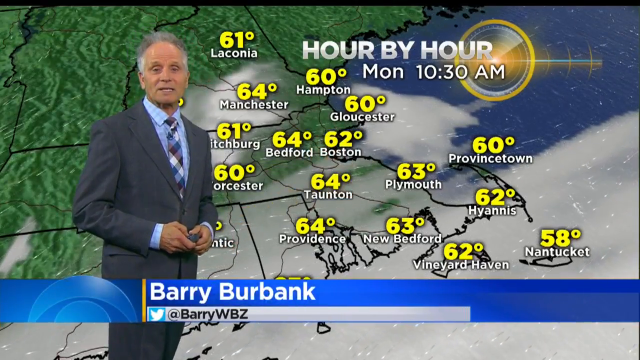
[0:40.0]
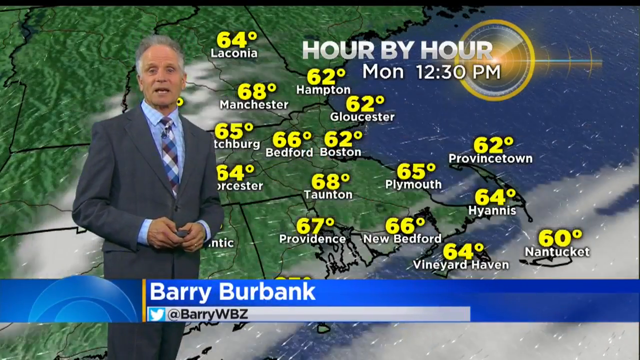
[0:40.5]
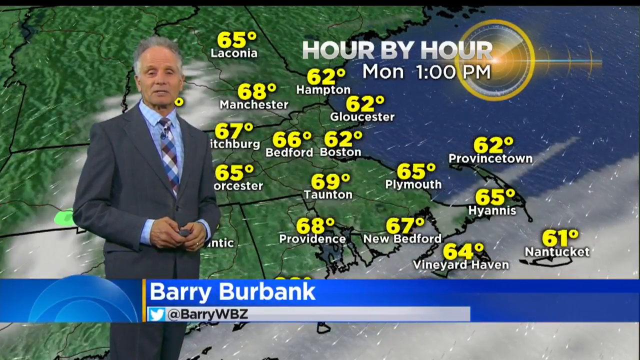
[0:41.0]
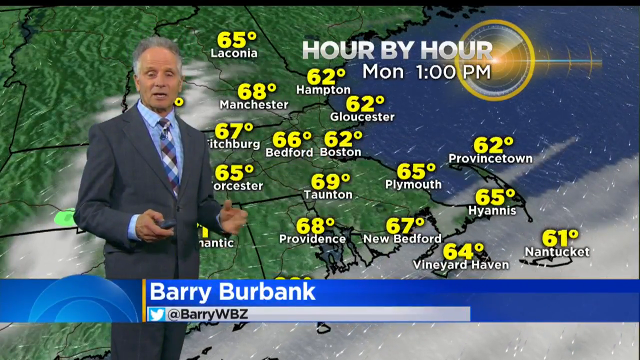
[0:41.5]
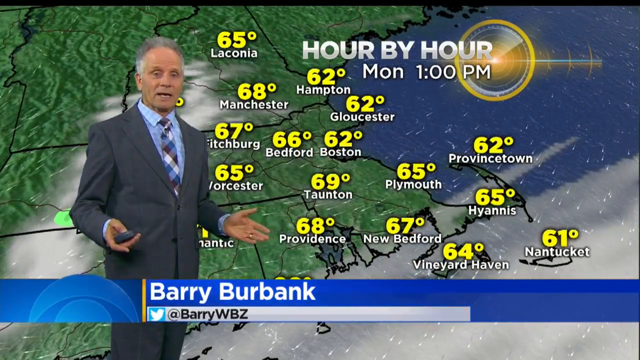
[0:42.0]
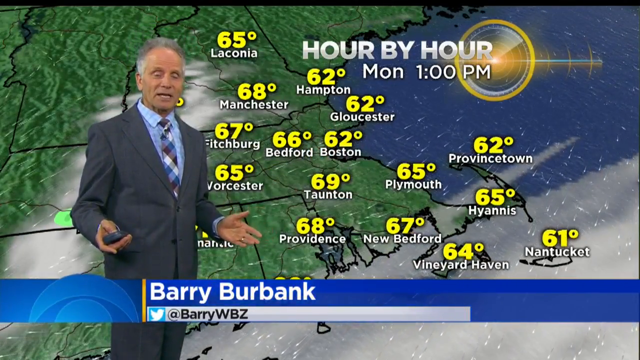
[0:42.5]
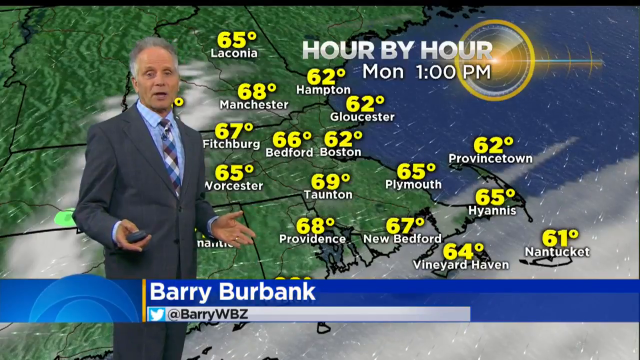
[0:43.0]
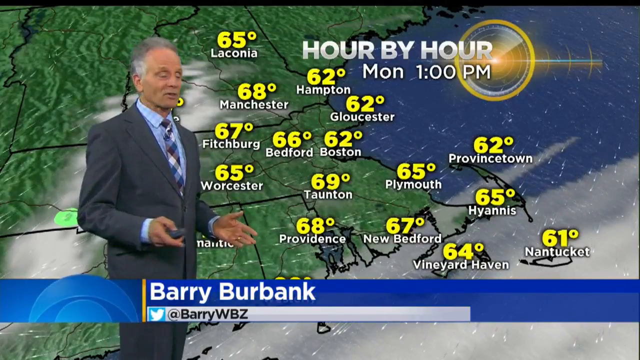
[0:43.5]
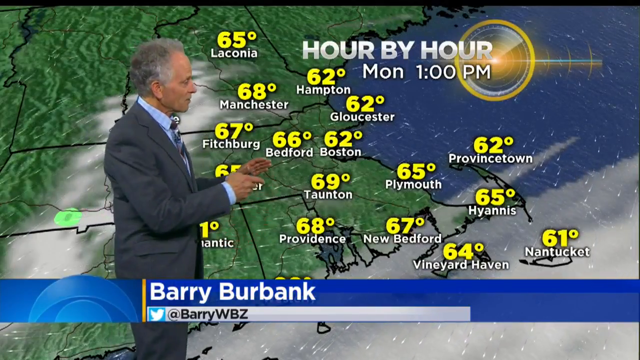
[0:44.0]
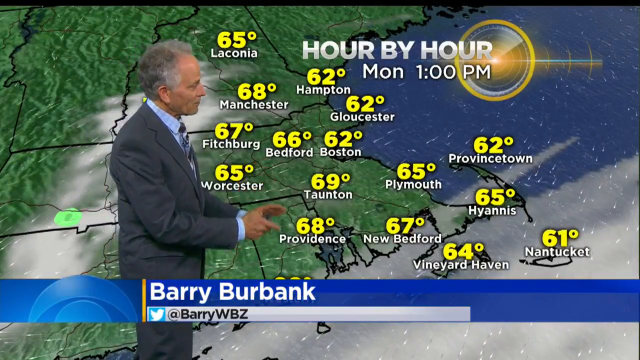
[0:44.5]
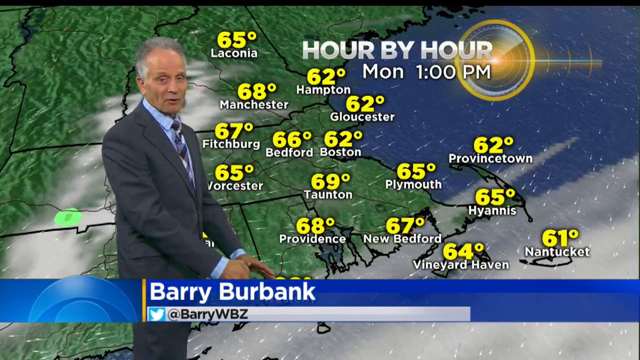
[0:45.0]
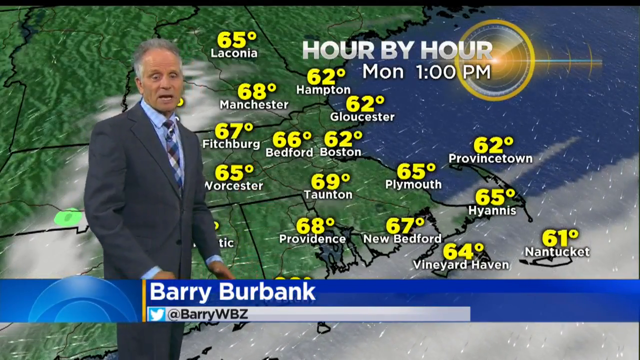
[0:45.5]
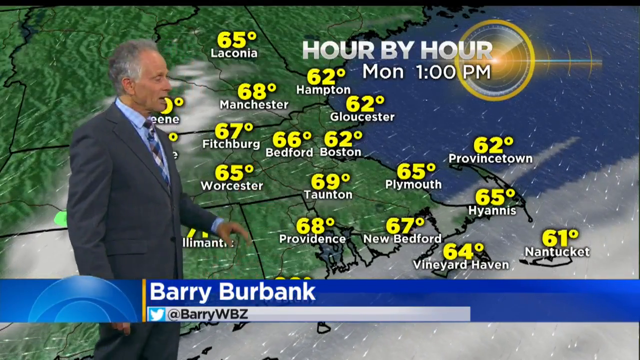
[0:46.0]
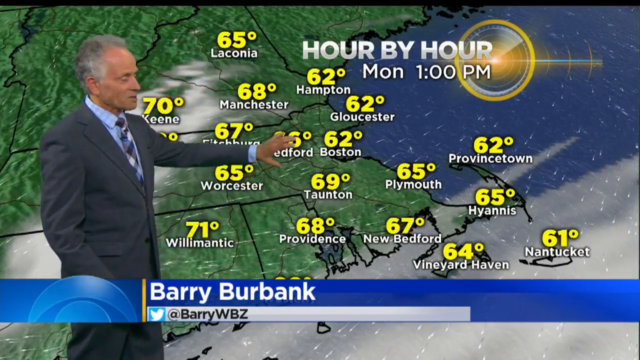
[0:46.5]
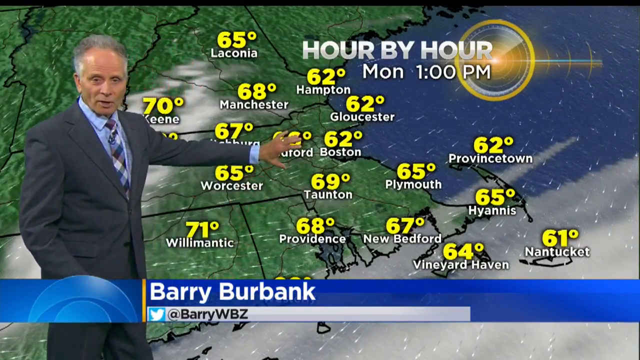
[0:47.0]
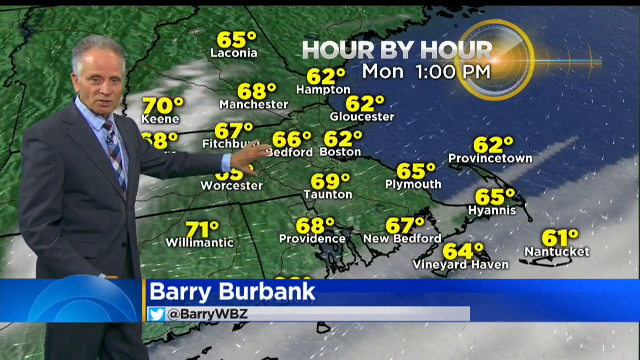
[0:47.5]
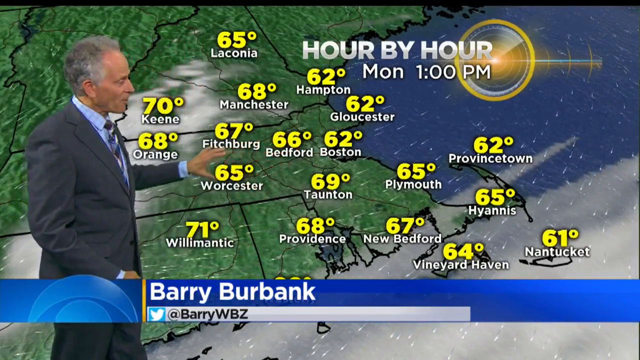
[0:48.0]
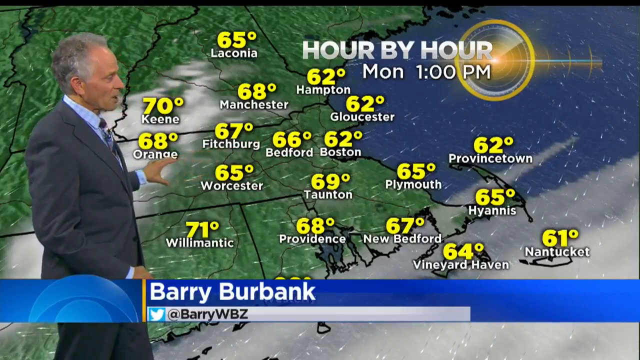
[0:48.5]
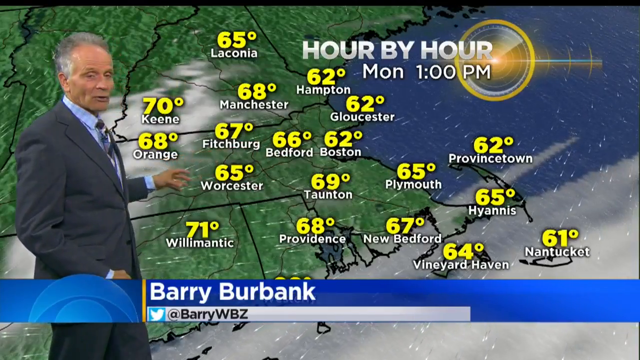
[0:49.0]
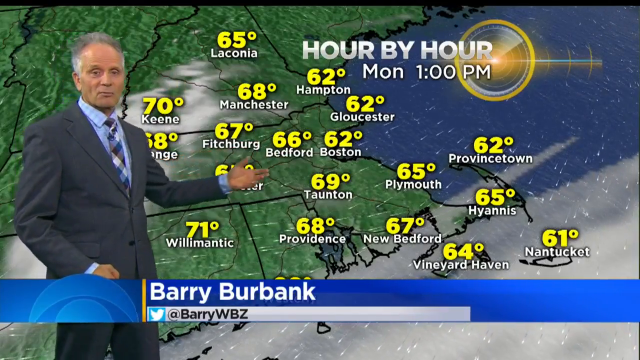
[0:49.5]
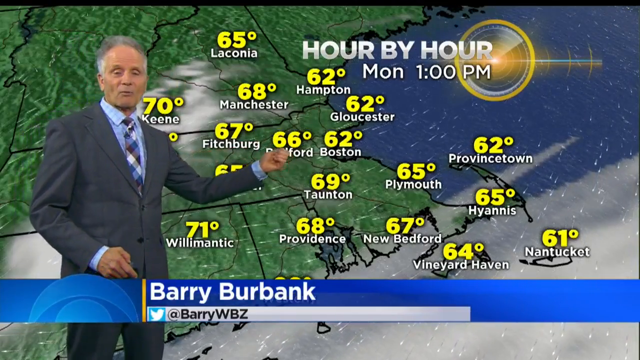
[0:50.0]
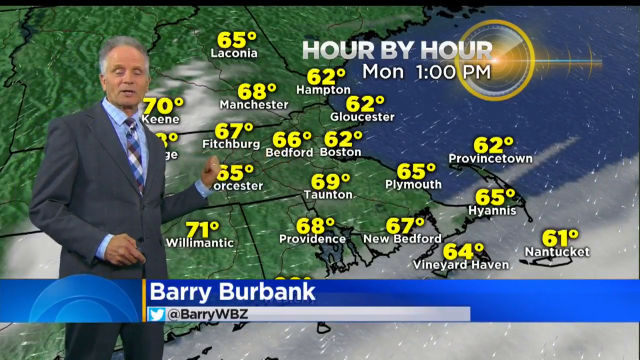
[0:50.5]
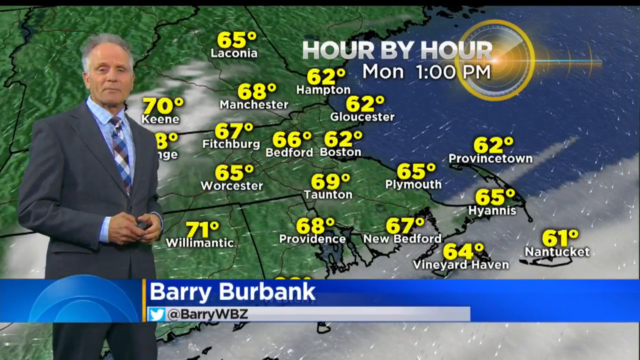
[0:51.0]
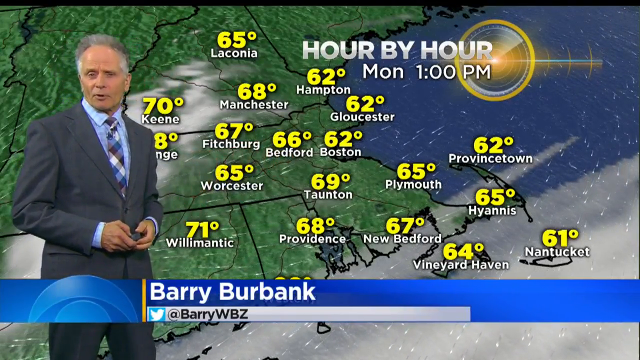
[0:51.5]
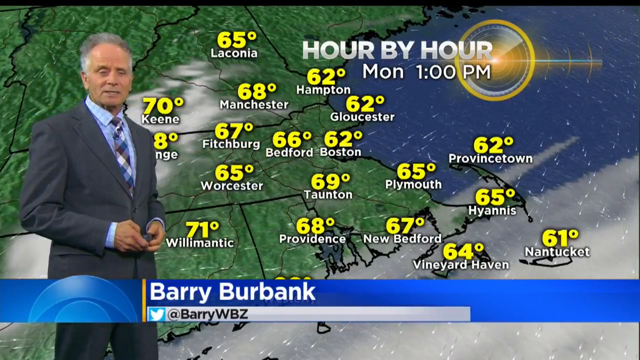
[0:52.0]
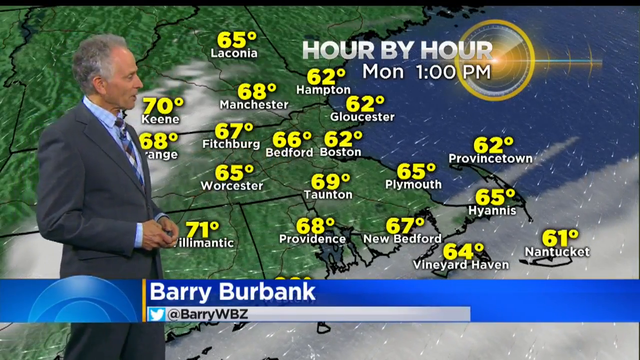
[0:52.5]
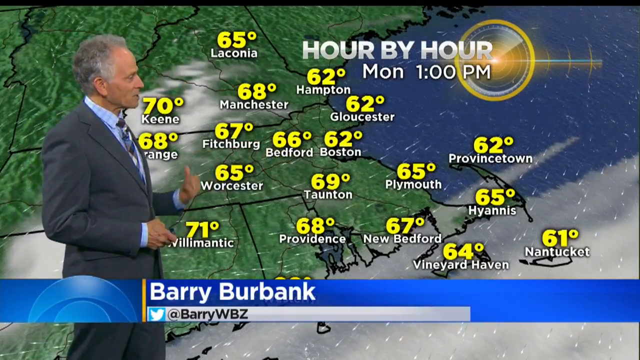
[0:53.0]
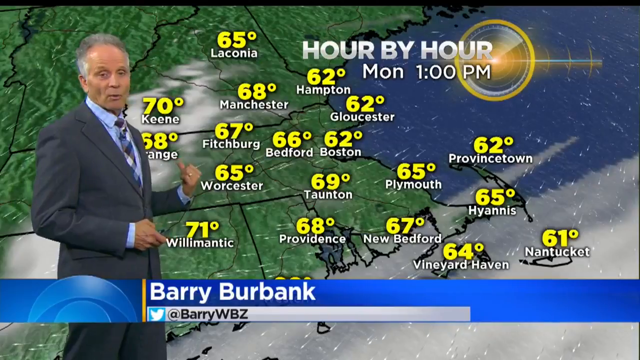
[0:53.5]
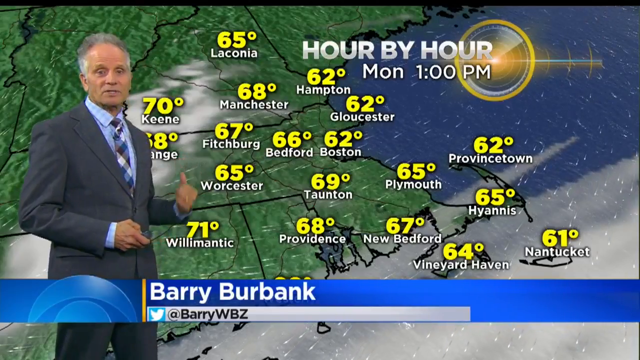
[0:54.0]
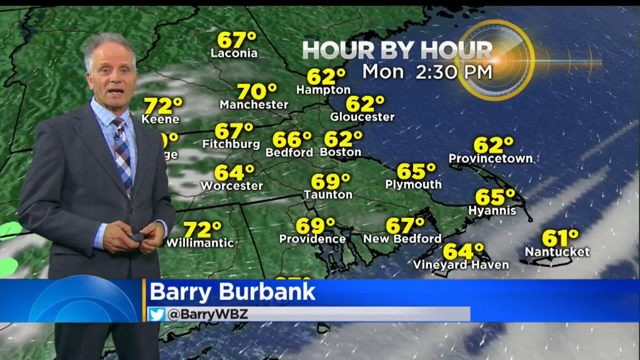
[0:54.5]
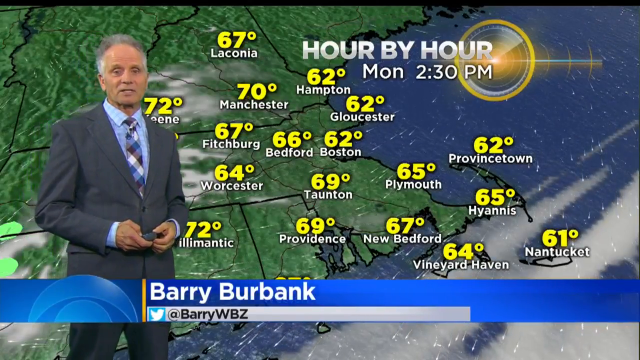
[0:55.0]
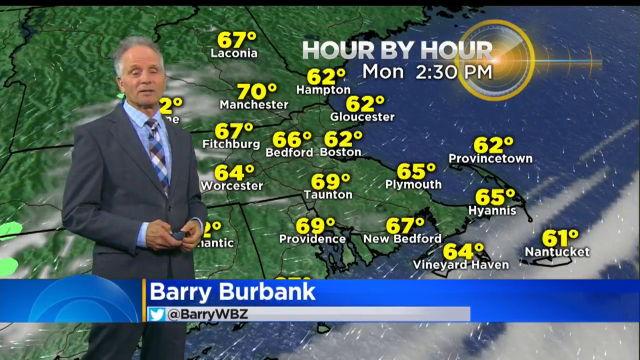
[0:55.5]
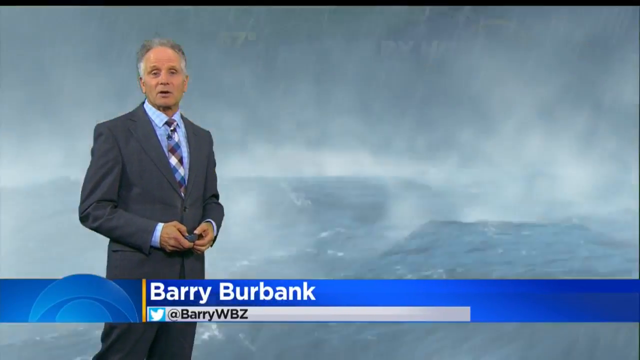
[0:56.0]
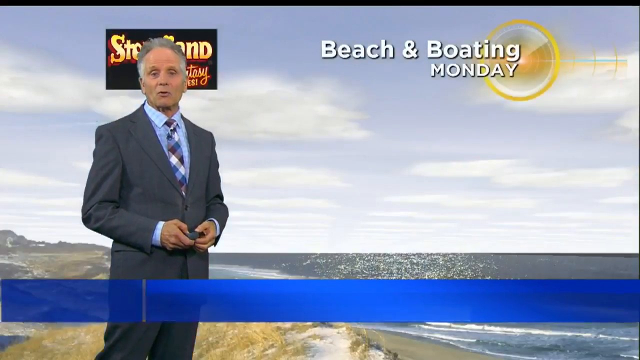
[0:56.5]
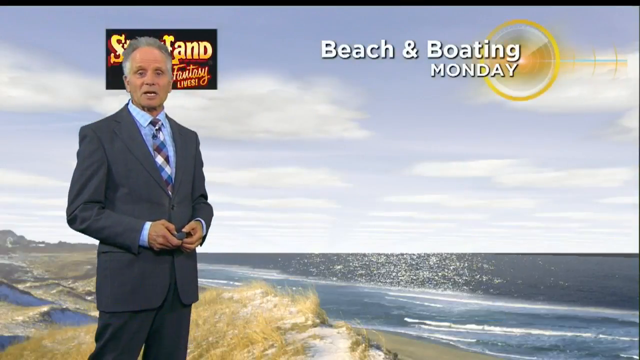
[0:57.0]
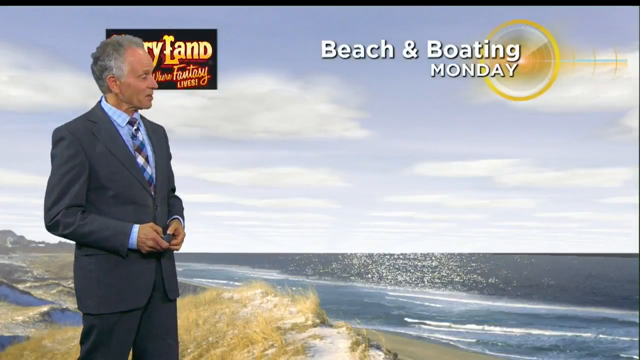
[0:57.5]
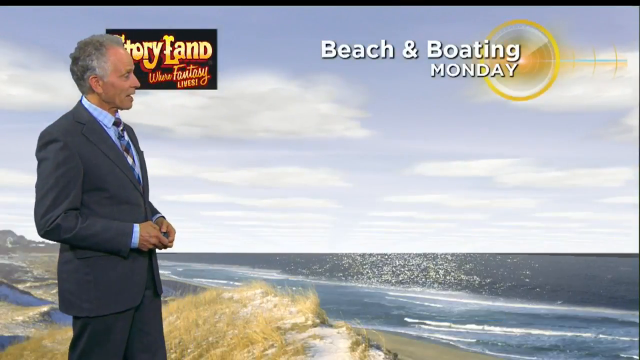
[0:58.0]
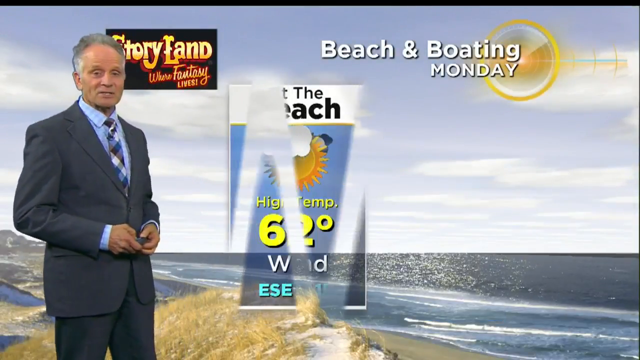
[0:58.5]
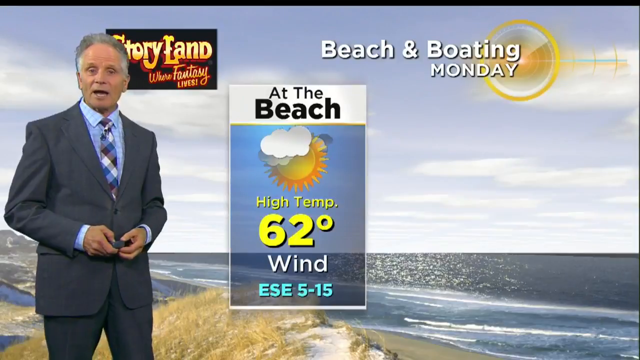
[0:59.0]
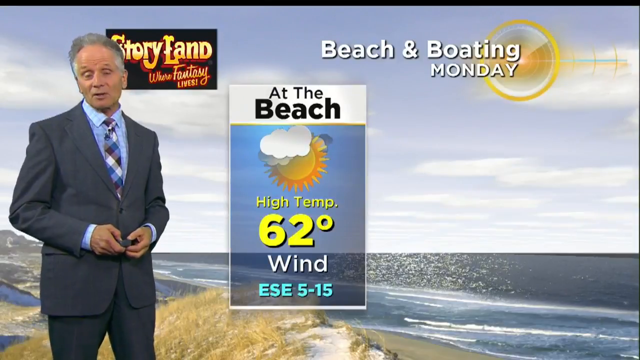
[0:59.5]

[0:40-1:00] The "hour by hour" screen reads "Monday at 1 p.m." and shows temperatures for different cities or states around the Boston area. The states are green, with some cloud cover and rain coming in from the east. At the bottom it reads "Barry Burbank @BarryWBZ". The meteorologist, in a gray suit and with gray hair, is talking and using his hands to show different things on the map. The display moves to another screen reading "beach and boating on Monday" as he talks, and then in the middle a box appears reading "at the beach", with "62 degrees" high temperature and wind "east southeast 5 to 15", with a beach in the background. In the top left corner is a black box with orange or gold writing that reads "StoryLand where Fantasy lives".